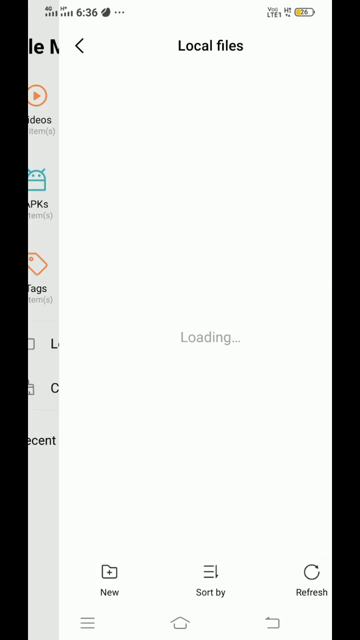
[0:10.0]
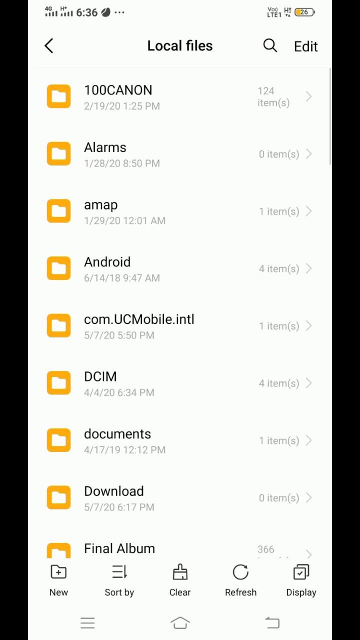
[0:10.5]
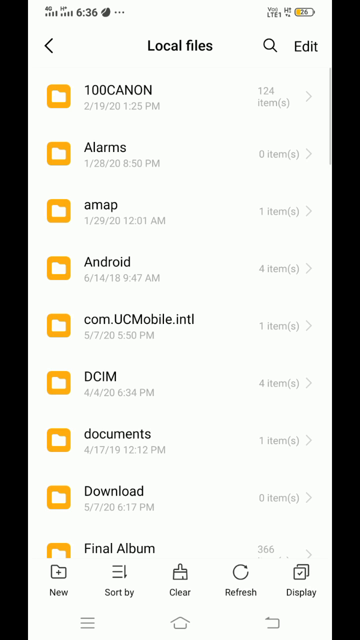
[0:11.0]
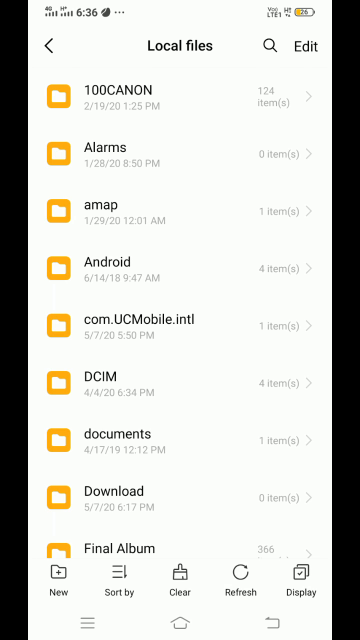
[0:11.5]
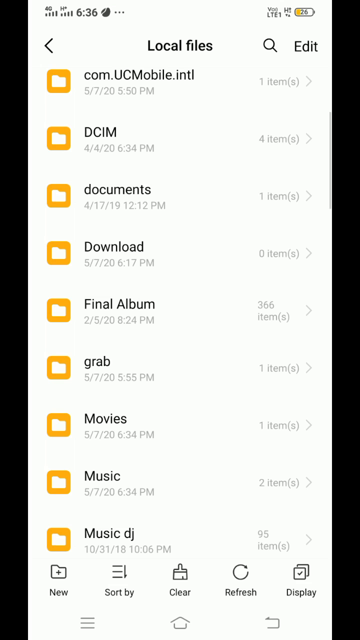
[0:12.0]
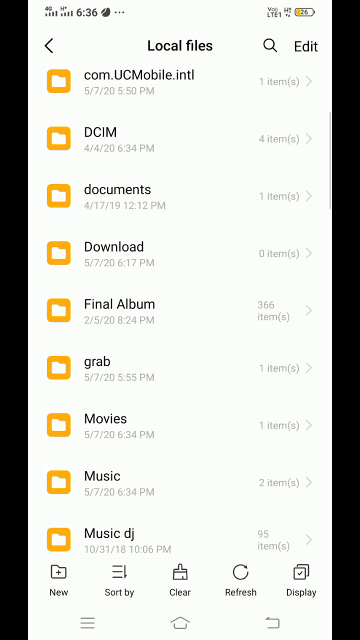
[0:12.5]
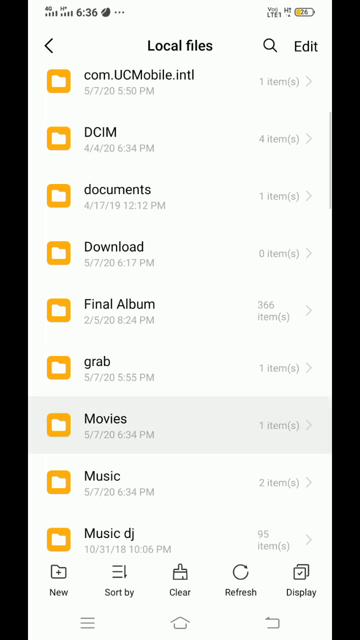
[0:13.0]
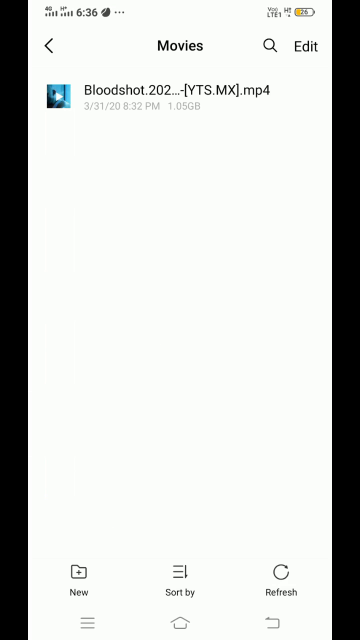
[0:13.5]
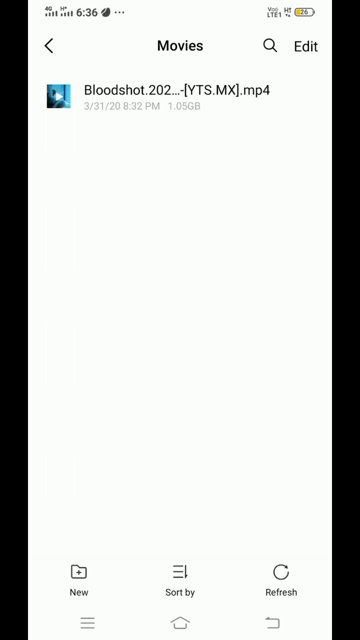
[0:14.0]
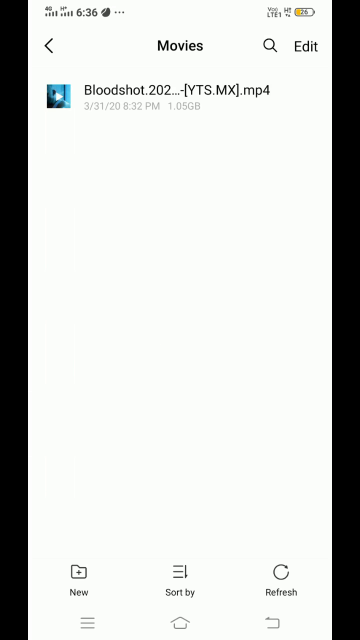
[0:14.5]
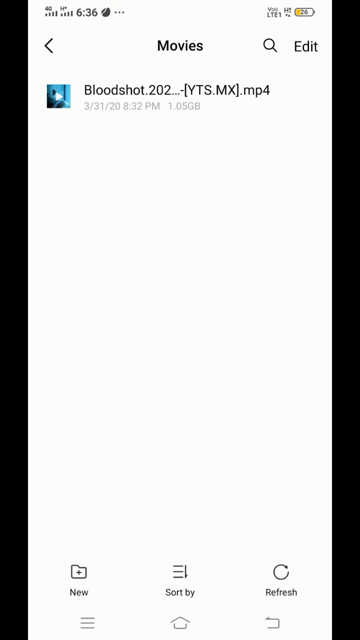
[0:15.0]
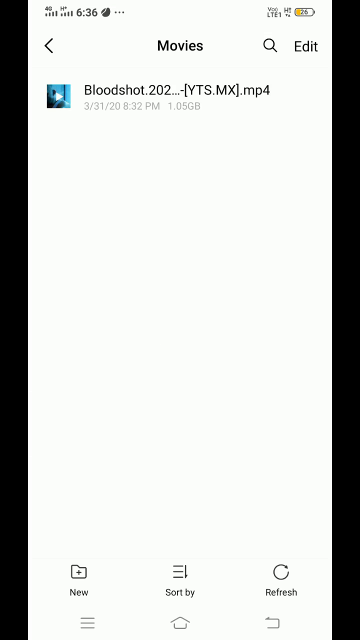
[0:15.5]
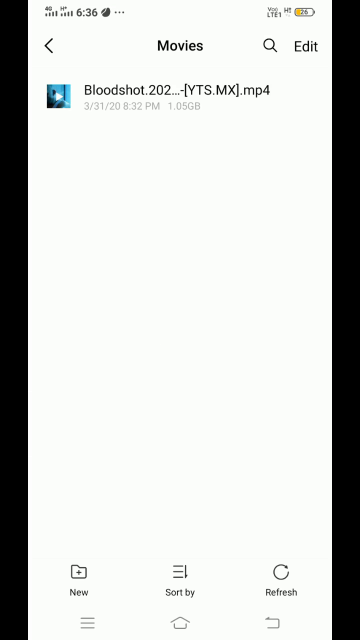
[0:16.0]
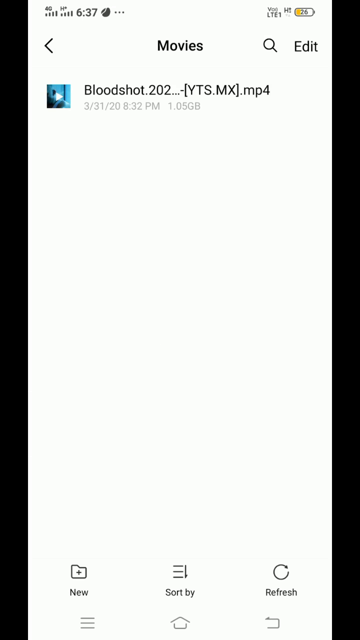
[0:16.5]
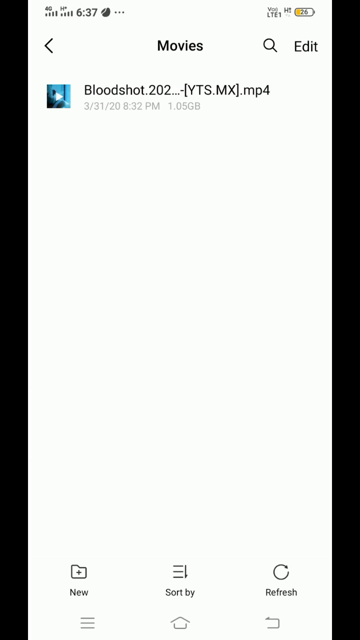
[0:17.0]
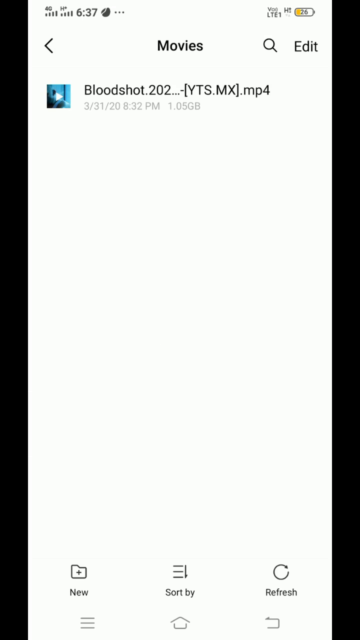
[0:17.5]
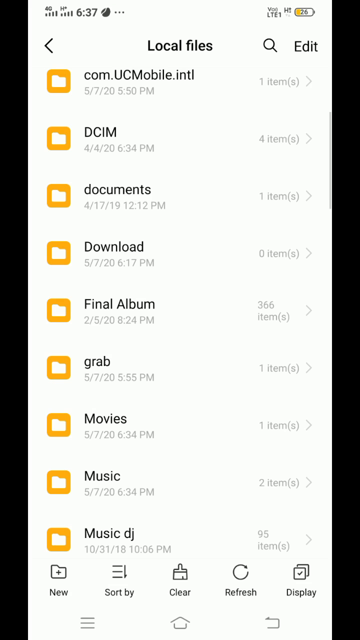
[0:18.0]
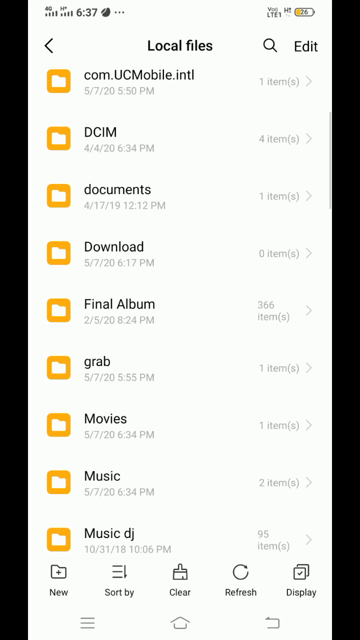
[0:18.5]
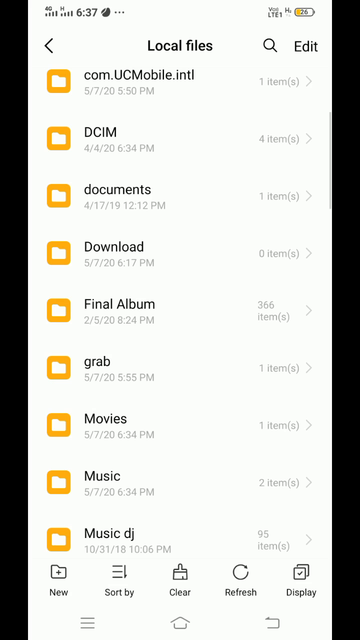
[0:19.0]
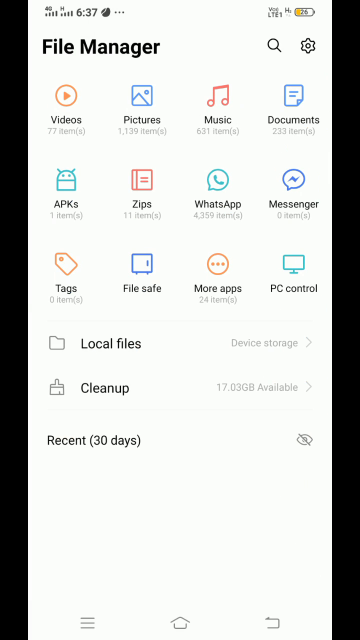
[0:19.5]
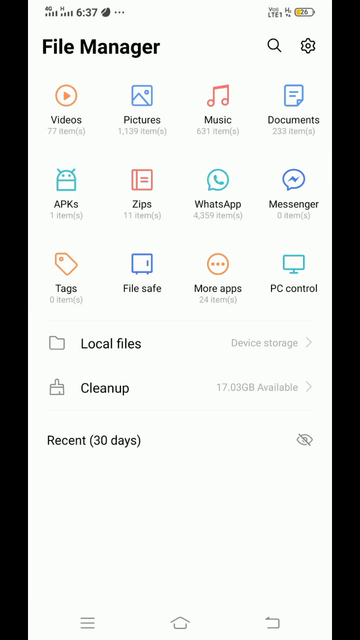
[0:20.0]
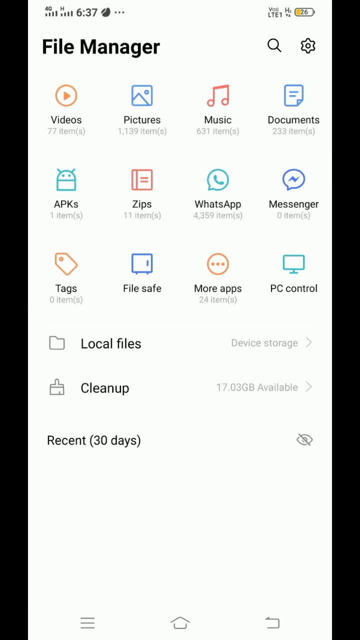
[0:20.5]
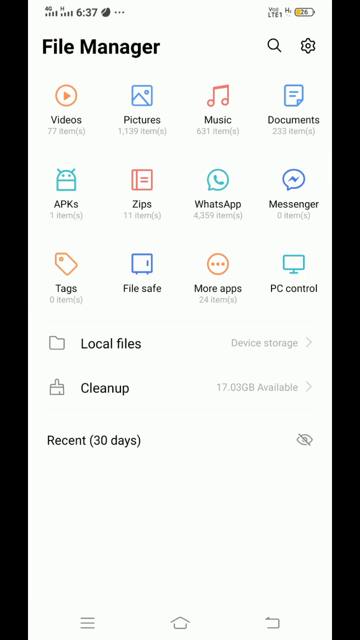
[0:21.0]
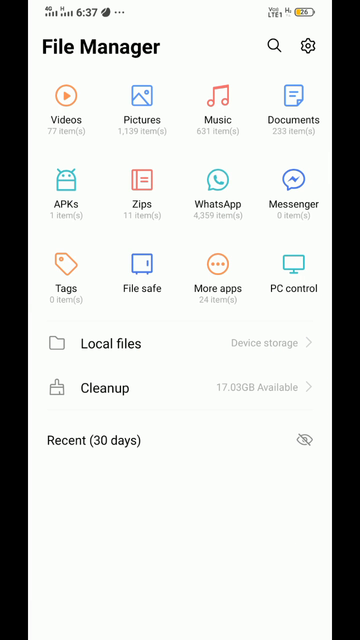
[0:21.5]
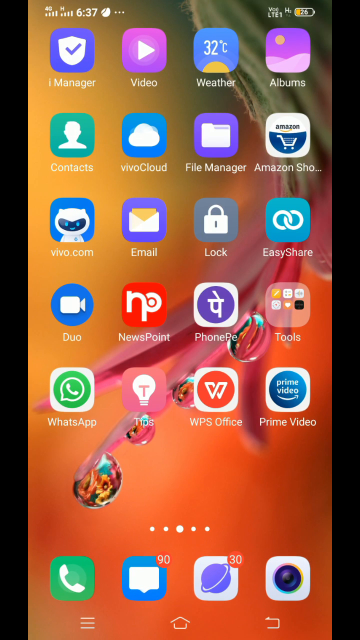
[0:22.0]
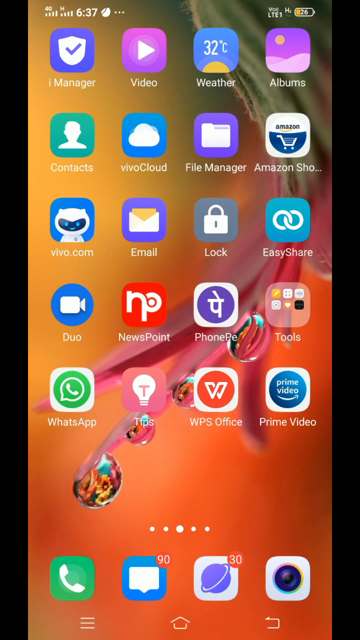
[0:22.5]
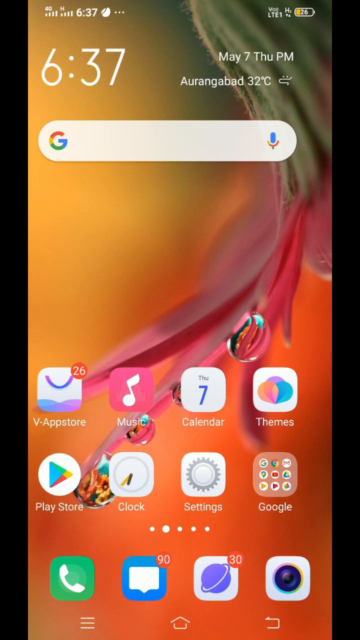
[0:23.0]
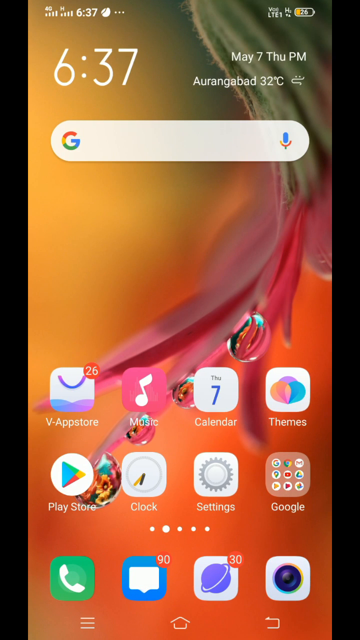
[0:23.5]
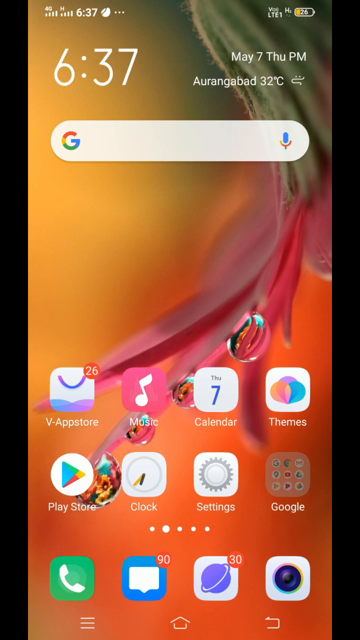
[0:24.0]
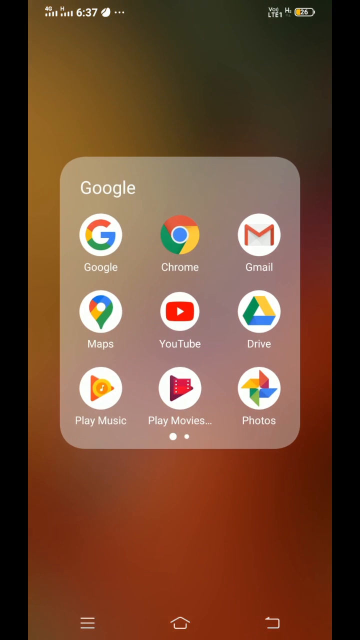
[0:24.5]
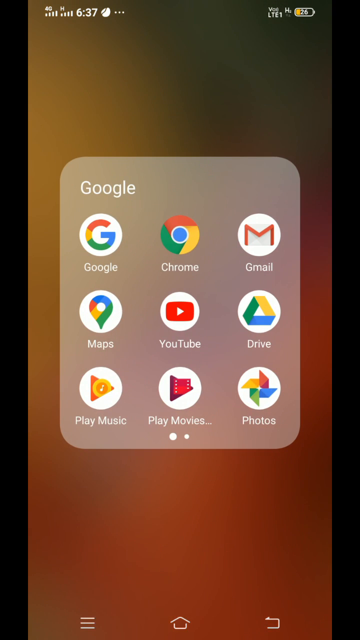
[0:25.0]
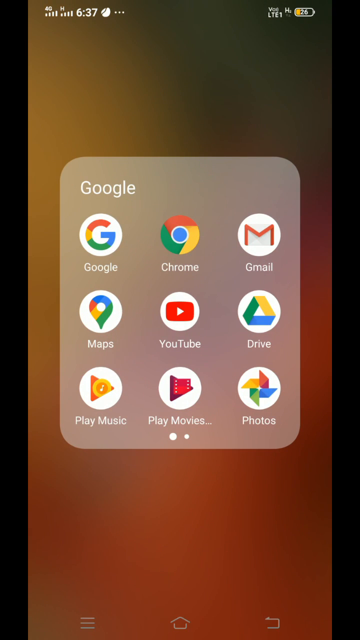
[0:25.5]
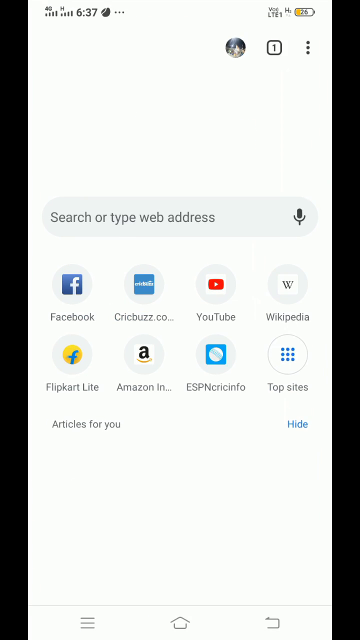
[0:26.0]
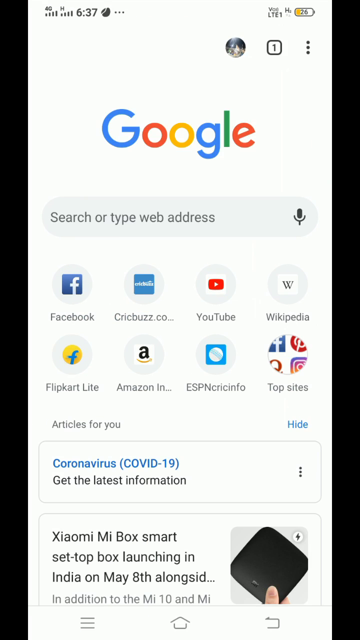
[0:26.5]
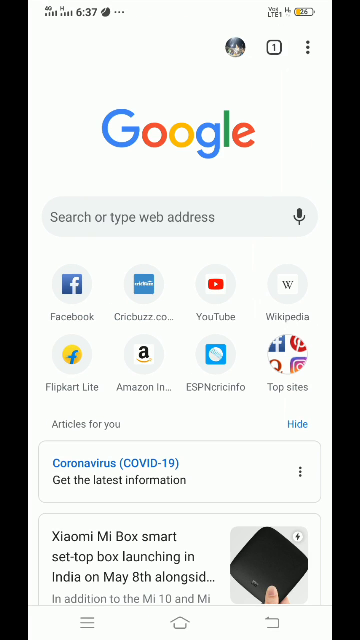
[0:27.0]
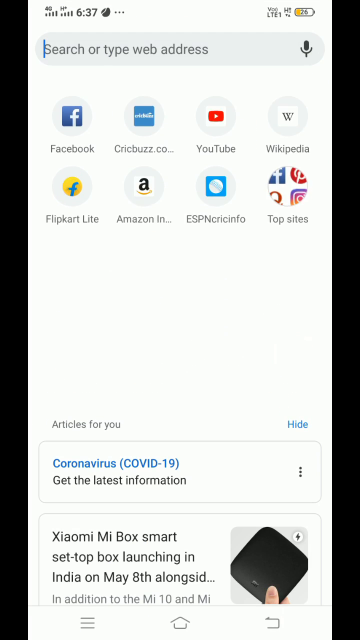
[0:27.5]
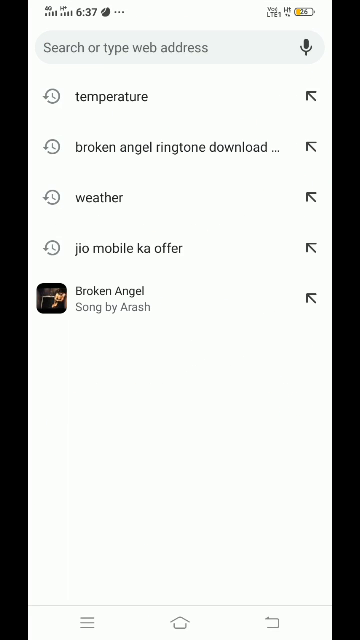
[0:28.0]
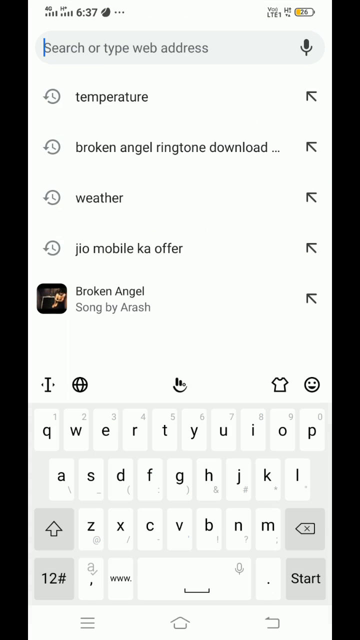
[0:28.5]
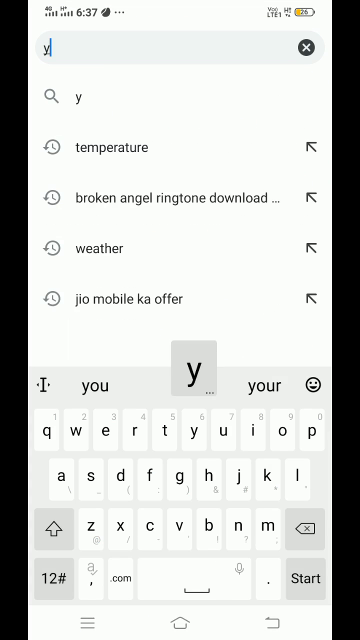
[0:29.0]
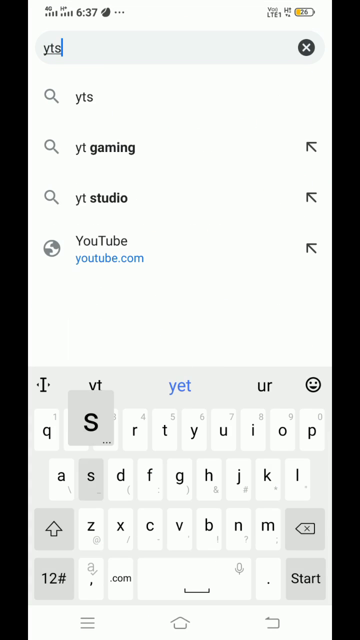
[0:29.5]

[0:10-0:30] A white screen swipes in from the left, containing a vertical row of files, each identified by a white file icon inside a yellow box with its title to the right. The top of the screen says 'local files', with a magnifying glass and edit to its right. File names include 100Canon, alarms, android and documents, and options run horizontally along the bottom: new, sort by, clear, refresh and display. The files begin to move up as if someone is swiping the screen, and then the file called movies is selected. The movies folder appears as a vertical white screen with black bars to the left and right. It holds only one entry, which says 'bloodshot' with the rest of the file name cut off; it is an MP4 file, identified by a small white play icon inside a blue box to the left of the title. The view swipes back to local files, which come in from the left, and then back to the file manager screen, as if moving out of that app. The file manager screen reduces in size and fades away into the middle of the screen, disappearing quickly, leaving the second home screen. A swipe back to the left sends these icons off to the right as the icons from the first home screen move in from the left. The clock at the top now says 6.37. One of the app icons at the bottom of the screen flashes; it is the one titled Google, with six inset icons inside the graphic. This graphic zooms up onto the screen against a multicoloured background. Within the grey box is writing that says Google, and three rows of three columns of icons called Google, Chrome, Gmail, Maps, YouTube, Drive, Play Music, Play Movies and Photos, each displayed as a circle with its logo inside and the title underneath. The Chrome button flashes and a white box zooms out from it to fill the screen. It is a Google search page with the multicoloured Google font along the top and a search bar underneath saying 'search or type web address', followed by two rows of four columns of icons and then offered articles. The search bar flashes grey and moves to the top of the screen as a keyboard pops up at the bottom. Letters on the keyboard flash as keys are pressed, and text appears in the search bar.